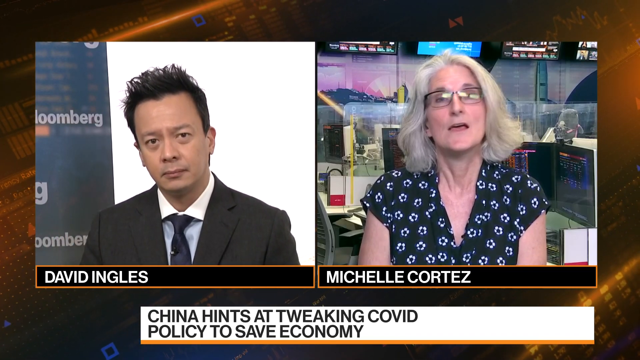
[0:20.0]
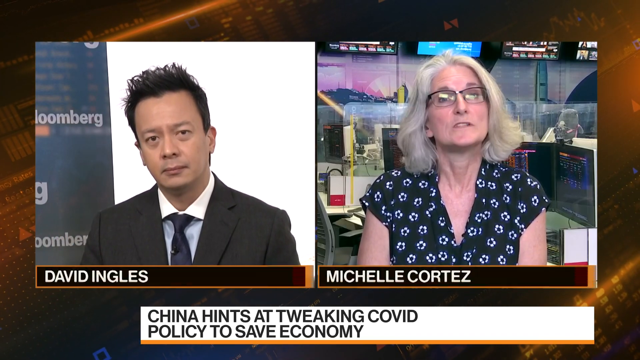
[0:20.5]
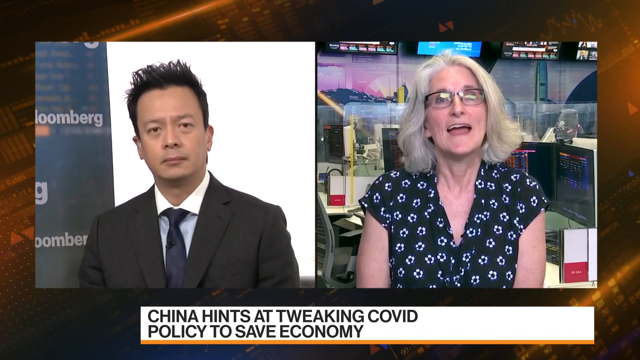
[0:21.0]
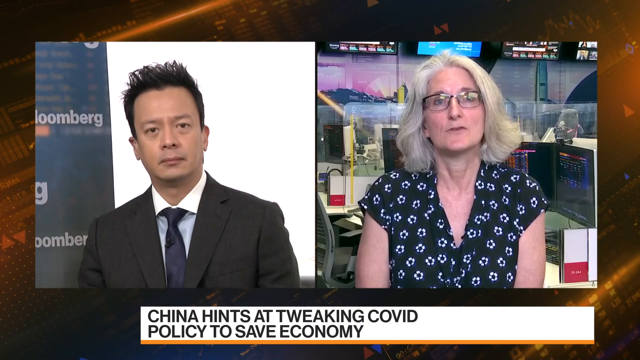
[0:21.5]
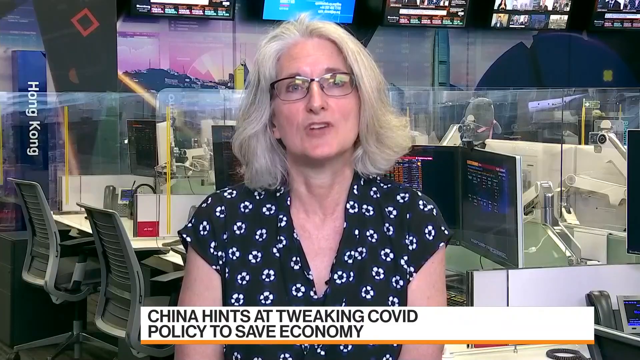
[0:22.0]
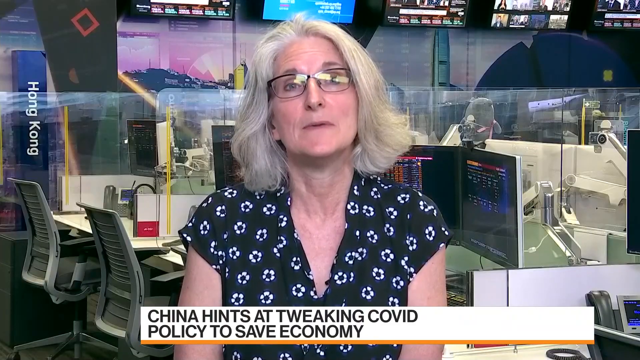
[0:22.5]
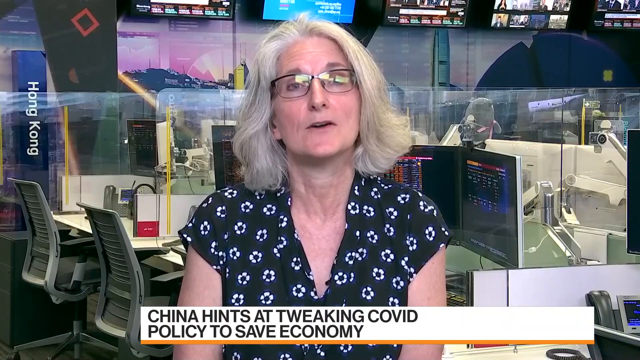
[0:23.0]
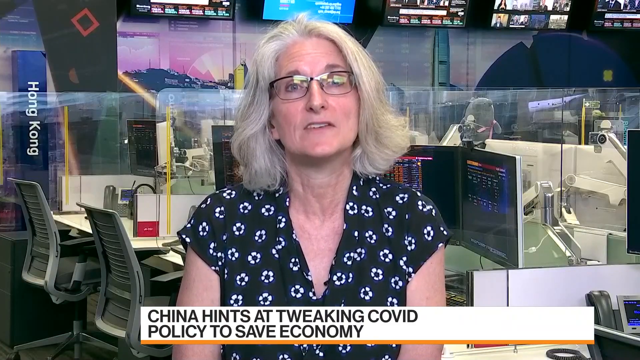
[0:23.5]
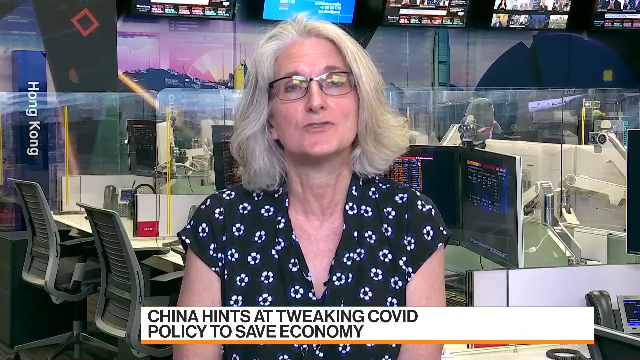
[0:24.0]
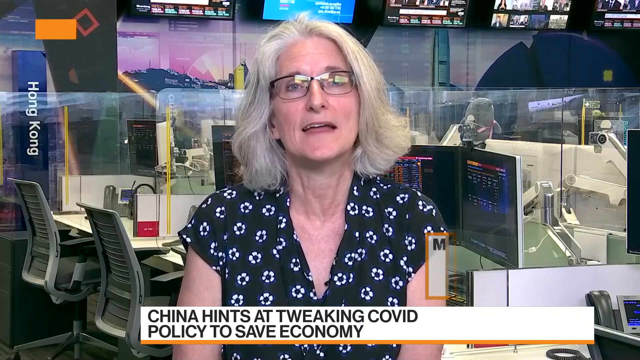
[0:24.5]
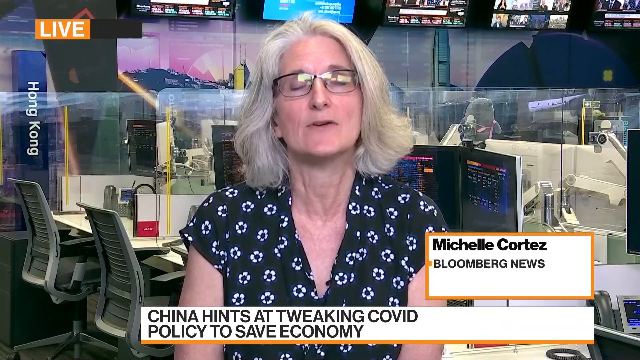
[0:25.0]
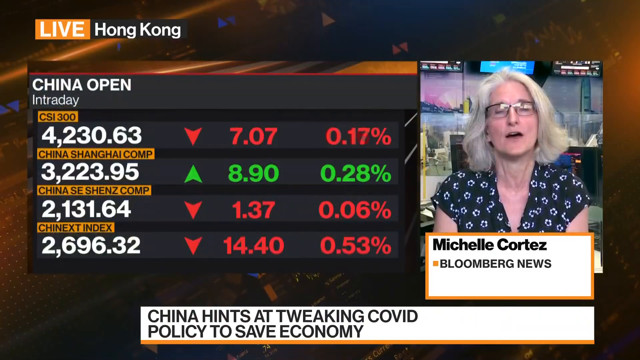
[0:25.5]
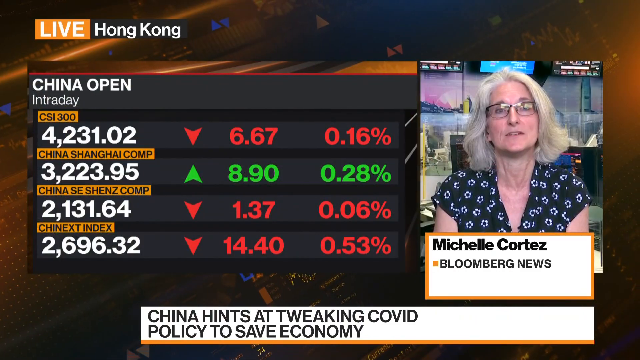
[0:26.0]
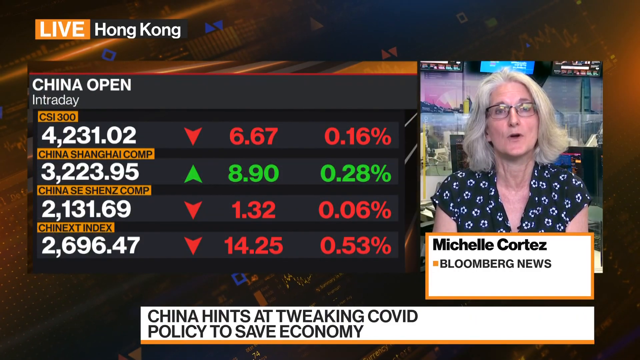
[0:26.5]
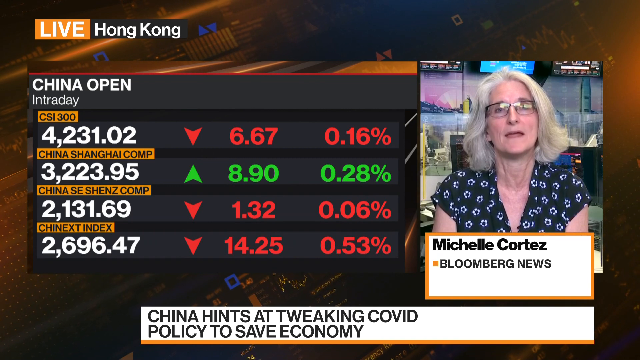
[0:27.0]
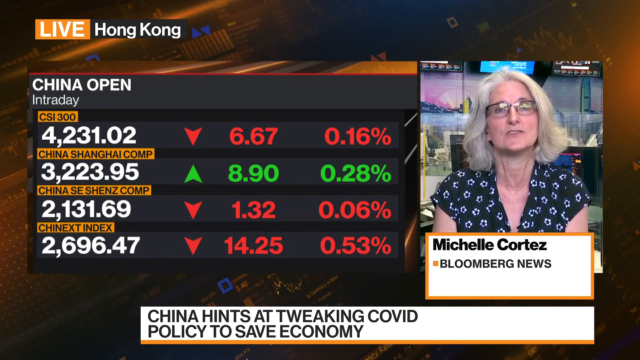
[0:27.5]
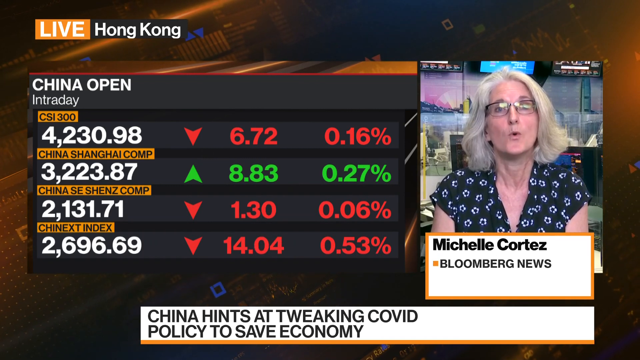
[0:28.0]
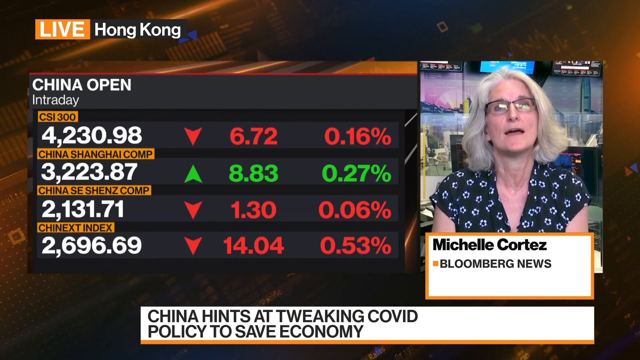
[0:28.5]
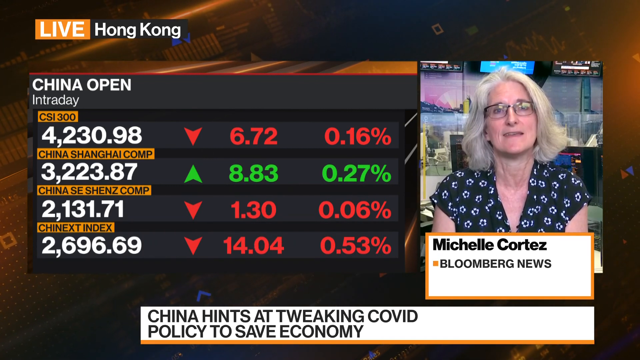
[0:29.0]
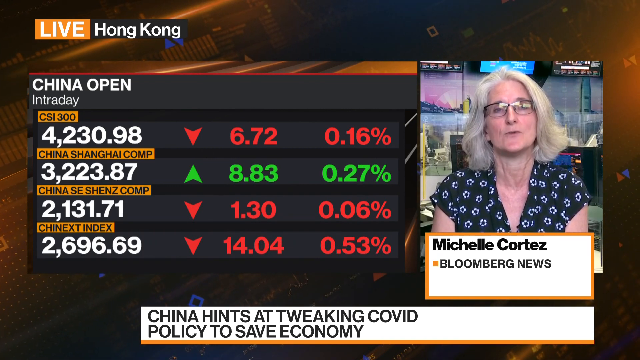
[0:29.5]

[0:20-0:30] A news program shows a man and a woman on a split screen. The man on the left is David Ingalls, who works for Bloomberg; he wears a suit, a button-down shirt and a tie. The woman on the right is Michelle Cortez, sitting in what looks to be a newsroom, with no information on exactly who she works for. A banner at the bottom of the screen reads "China hints at tweaking COVID policy to save economy." David listens intently to Michelle. The split screen disappears and the screen is filled completely with the view of Michelle Cortez, with a caption on the left side reading "Hong Kong." The screen then changes to information for Hong Kong's stock market, with a label at the top reading "Live Hong Kong." A photo of Michelle Cortez appears directly to the right of the stock market news, giving her name and "Bloomberg News."